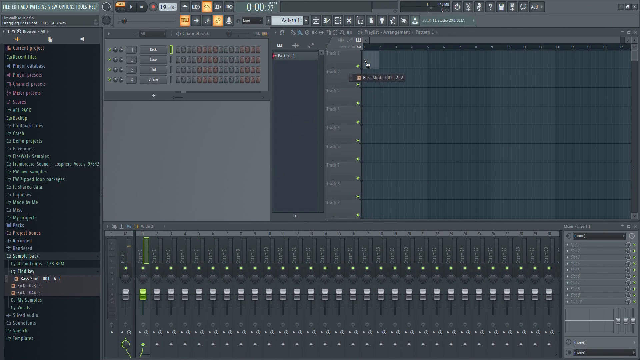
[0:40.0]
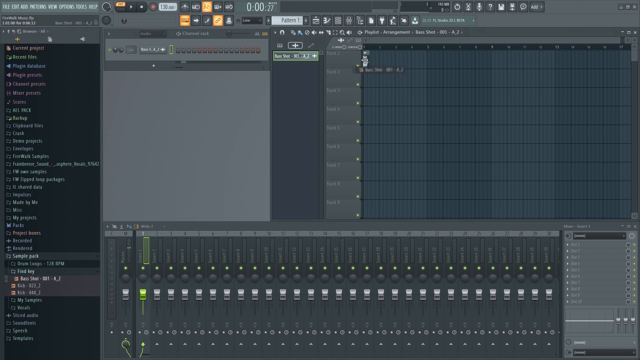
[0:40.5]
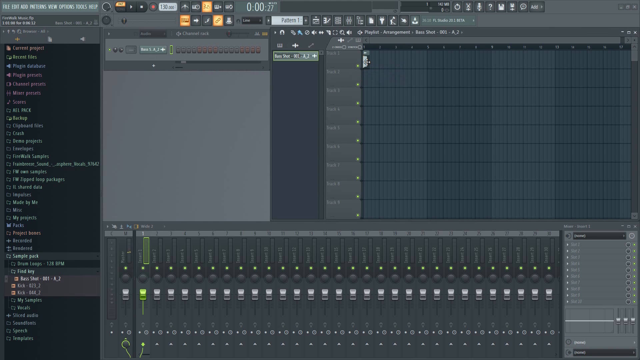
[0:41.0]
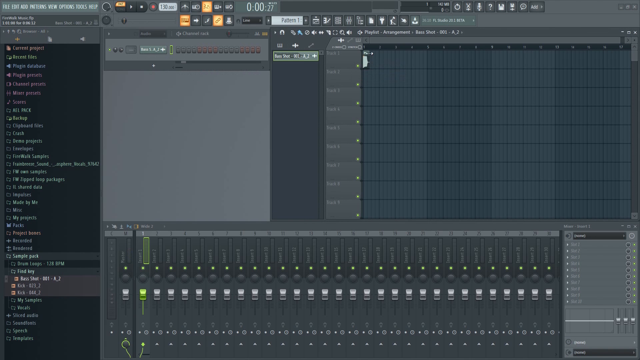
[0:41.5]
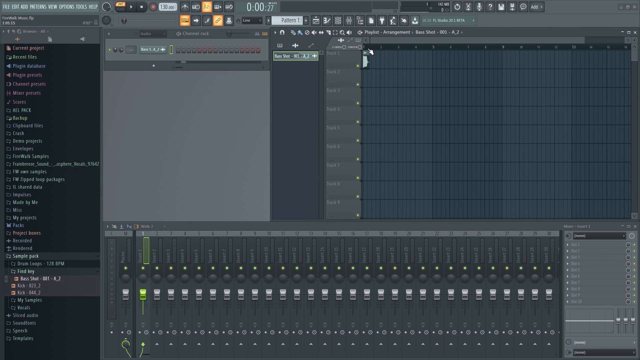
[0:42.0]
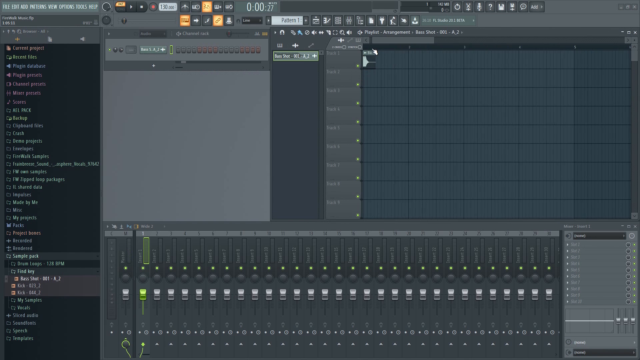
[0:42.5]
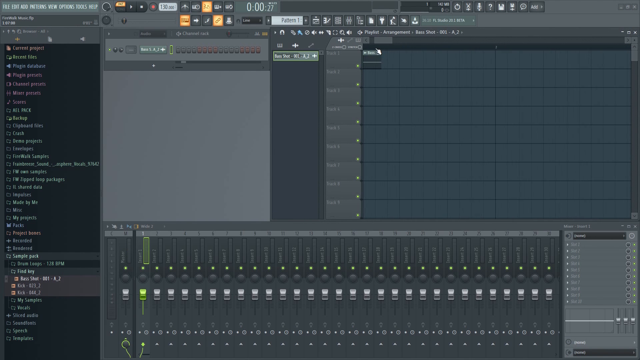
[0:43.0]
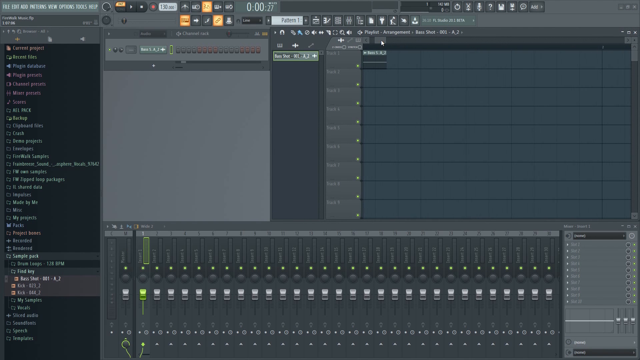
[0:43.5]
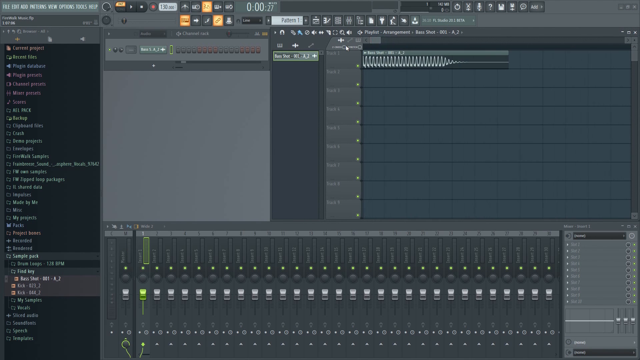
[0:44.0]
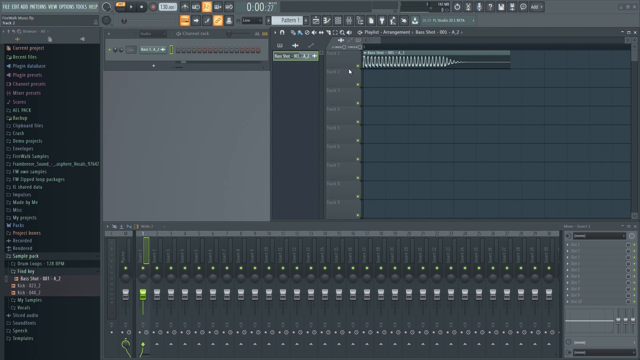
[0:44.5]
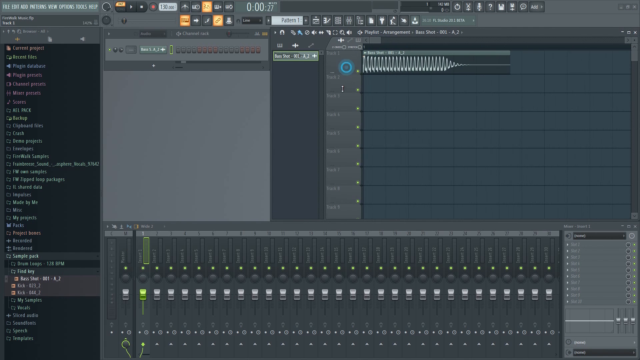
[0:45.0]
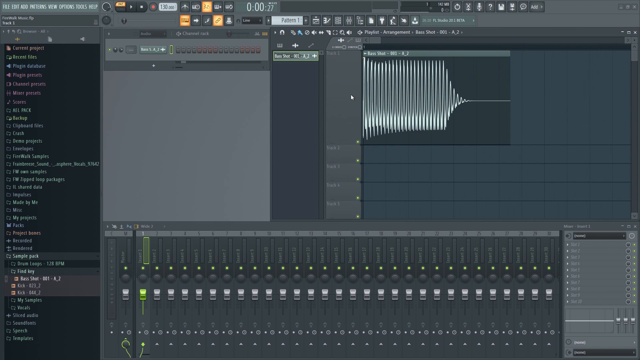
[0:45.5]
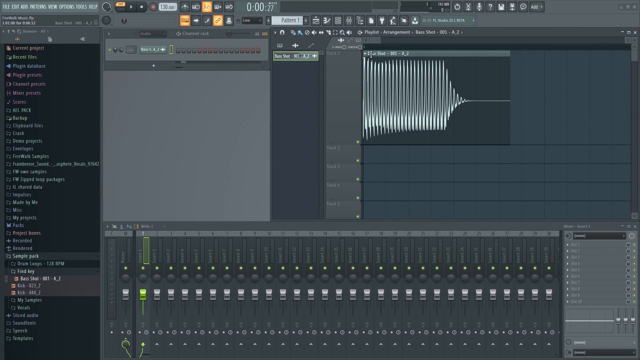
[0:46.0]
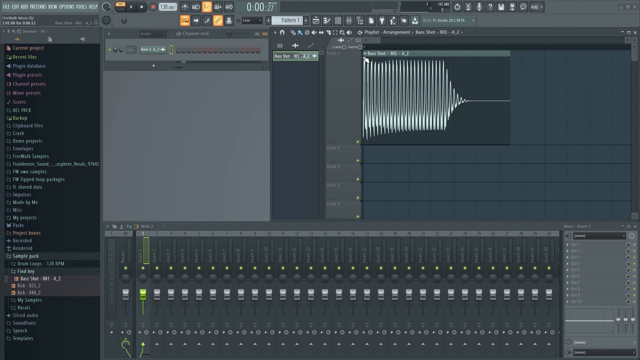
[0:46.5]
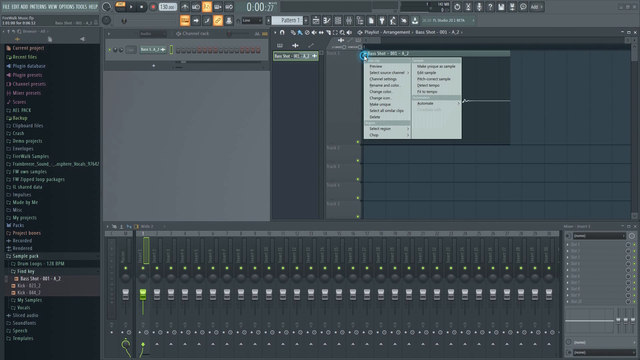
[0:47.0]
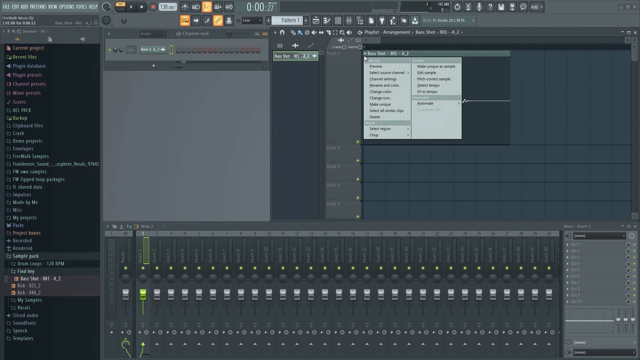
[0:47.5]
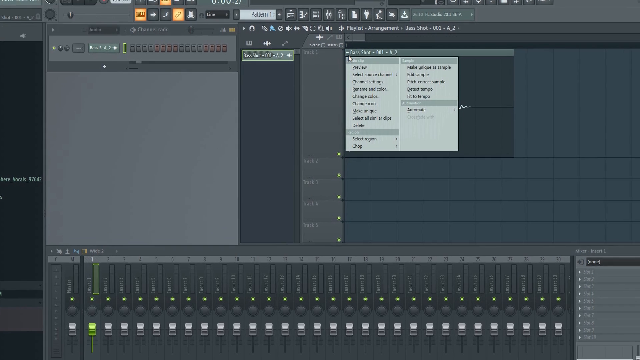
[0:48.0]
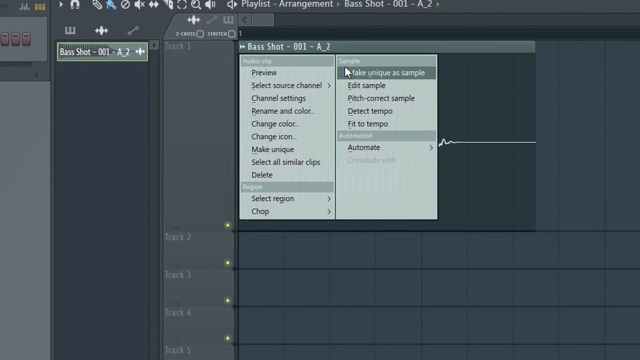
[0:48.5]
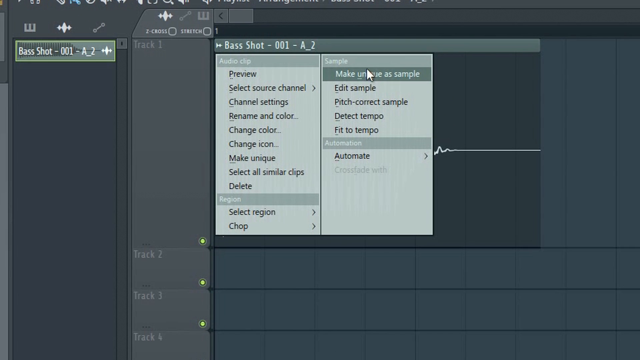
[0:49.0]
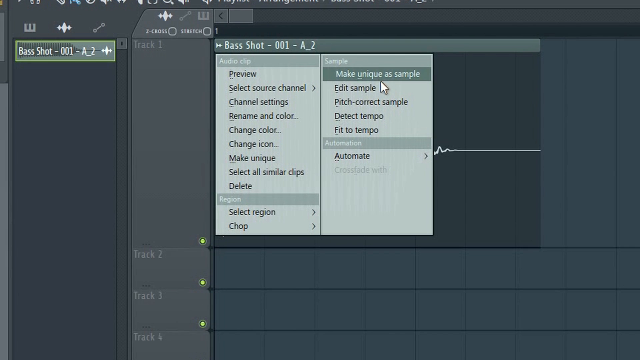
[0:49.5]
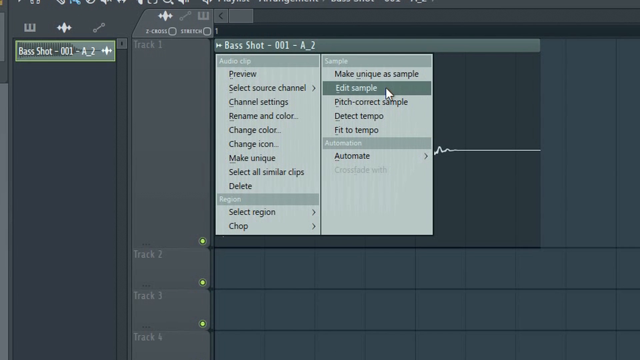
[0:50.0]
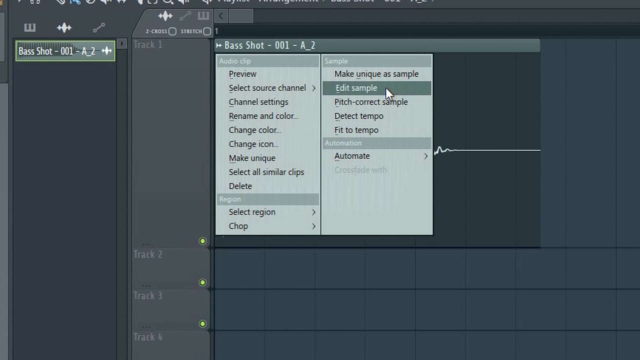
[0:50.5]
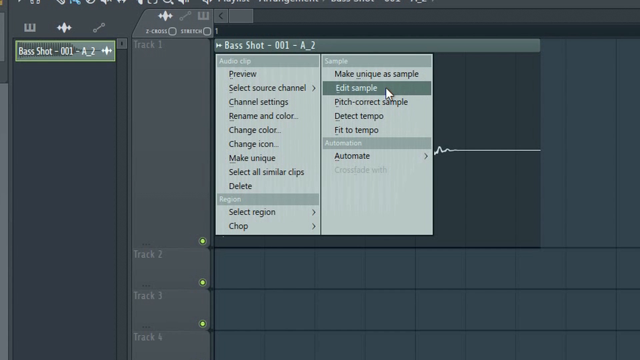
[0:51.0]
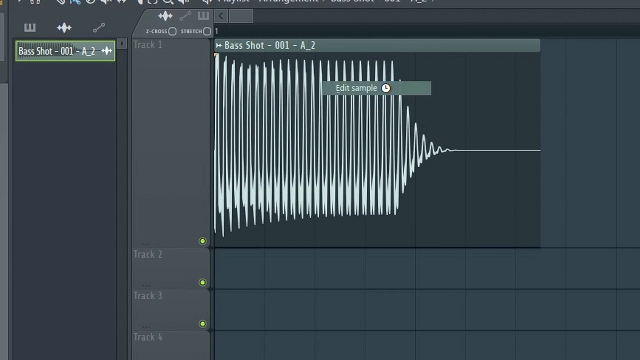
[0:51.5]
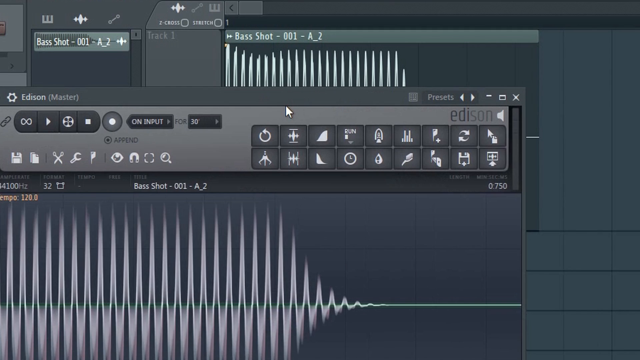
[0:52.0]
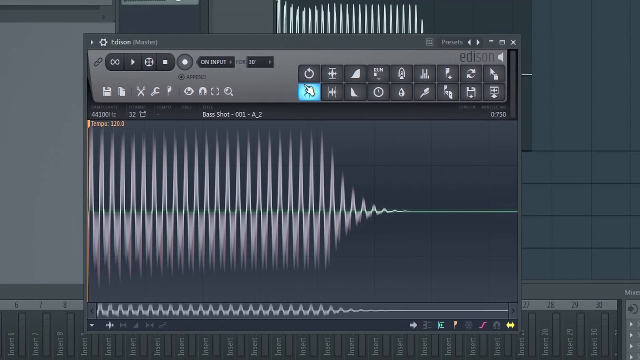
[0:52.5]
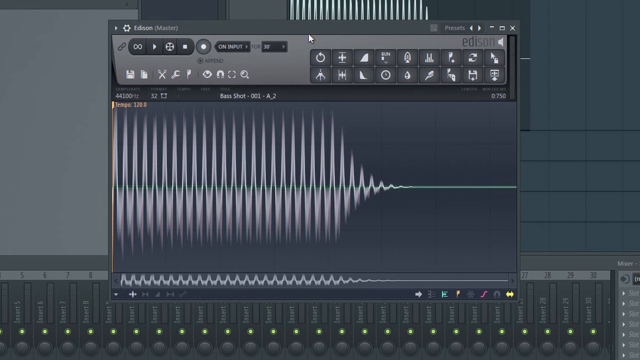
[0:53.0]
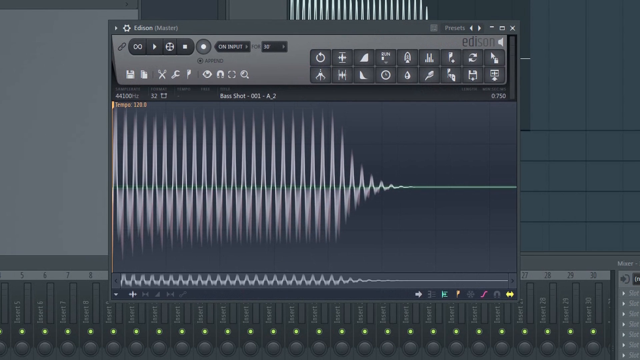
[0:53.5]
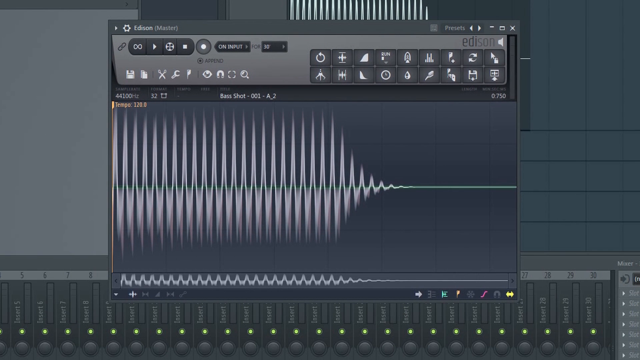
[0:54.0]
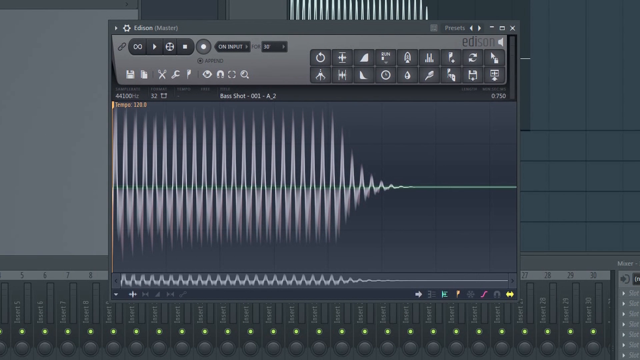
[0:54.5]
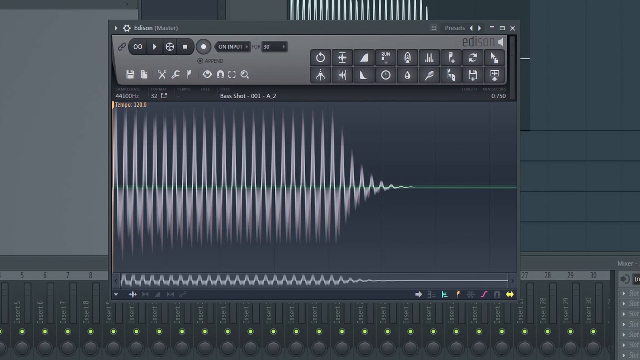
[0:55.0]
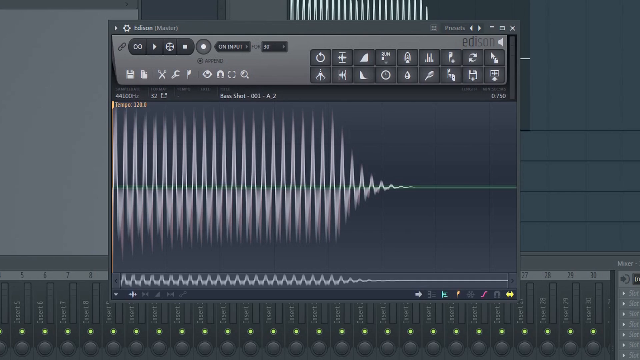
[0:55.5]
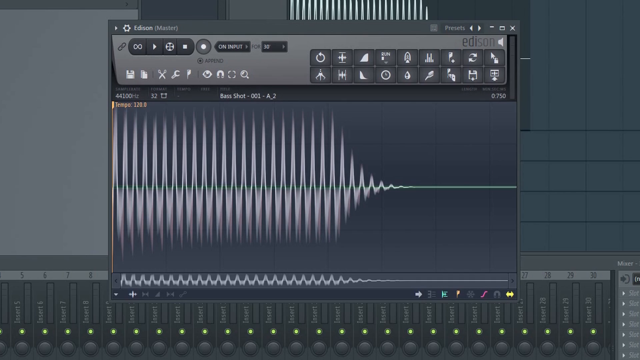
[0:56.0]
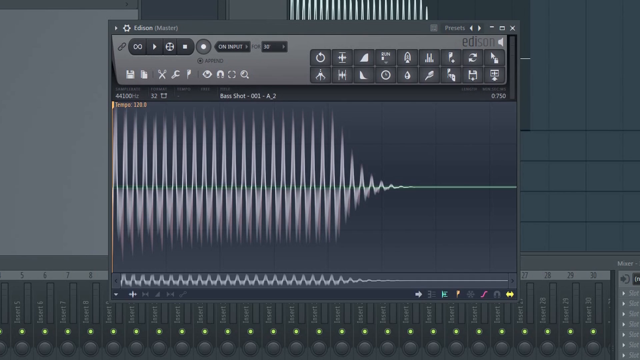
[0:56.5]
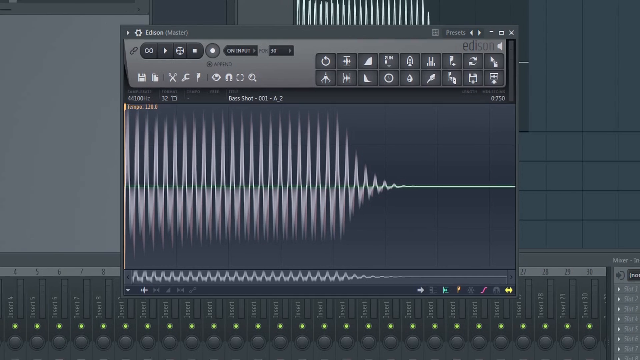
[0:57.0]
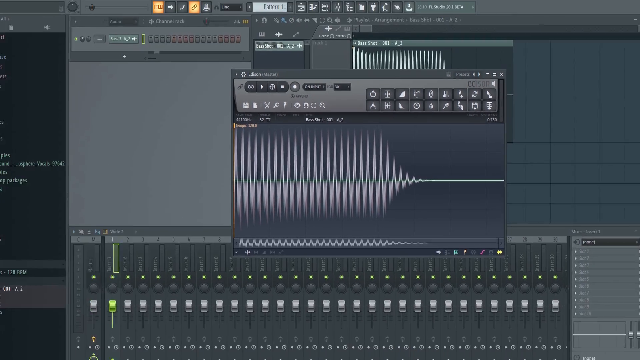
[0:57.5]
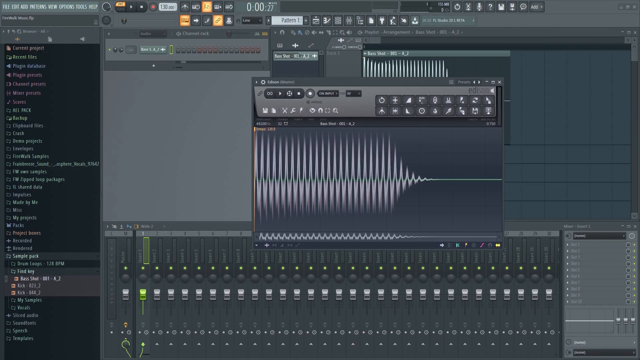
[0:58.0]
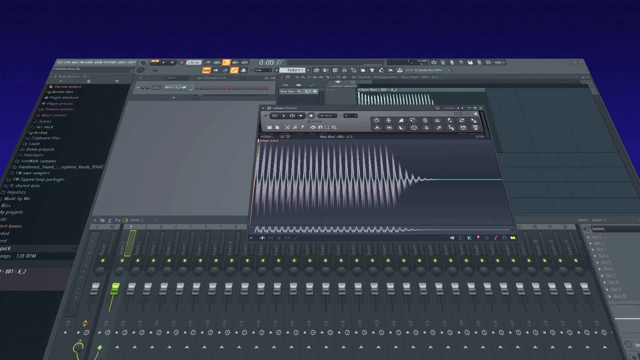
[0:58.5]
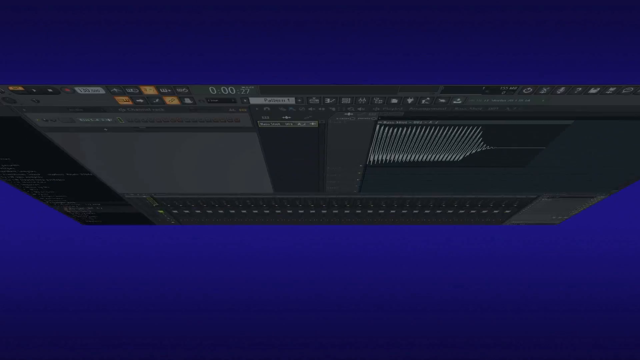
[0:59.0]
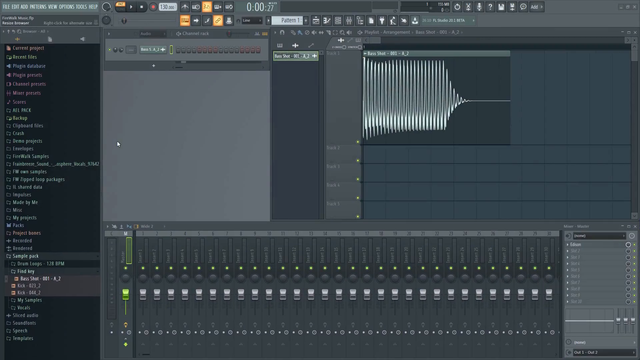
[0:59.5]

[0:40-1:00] A software program, probably on someone's computer, is shown; it looks like some kind of music program, maybe a music analysis program. The dominant colors on the screen are light gray and dark gray. Someone flips through different parts of the program, and a waveform, probably from a song or piece of music, is shown on the right. The camera zooms into a menu, revealing a mini-menu with black text reading "Preview, Select Source Channel, Channel Settings, Rename and Color, Change Color, Change Icon, Make Unique, Select All Similar Clips, Delete, Select Region, Chop." To the right, another menu reads "Make Unique and Sample, Edit Sample, Pitch Correct, Sample, Detect Tempo, Fit to Tempo and Automate." The user clicks "EDIT SAMPLE," and another window pops up with the waveform in it.